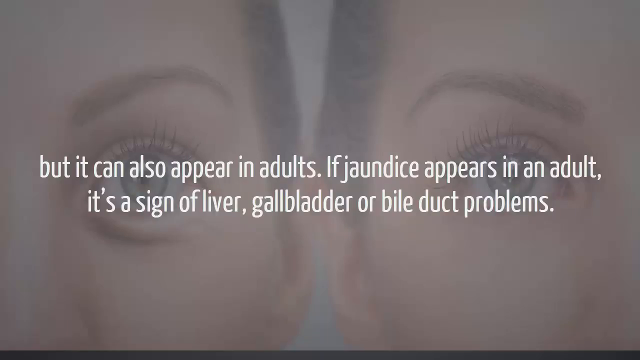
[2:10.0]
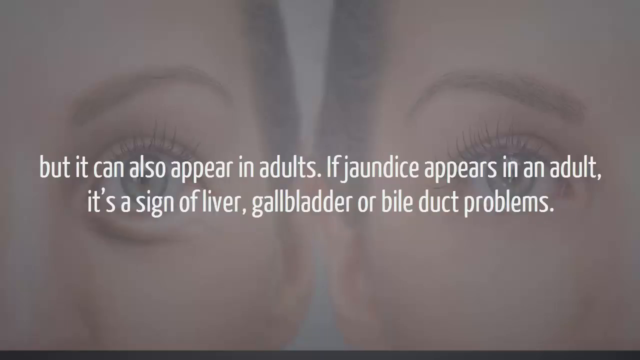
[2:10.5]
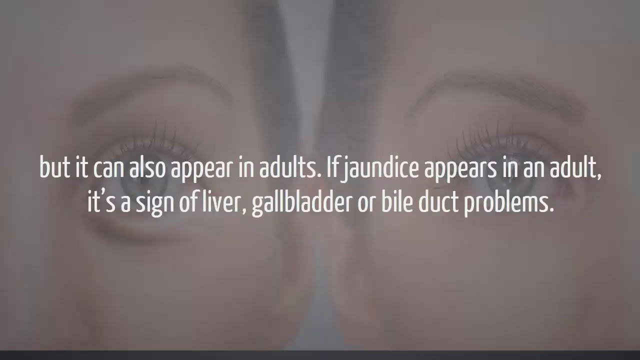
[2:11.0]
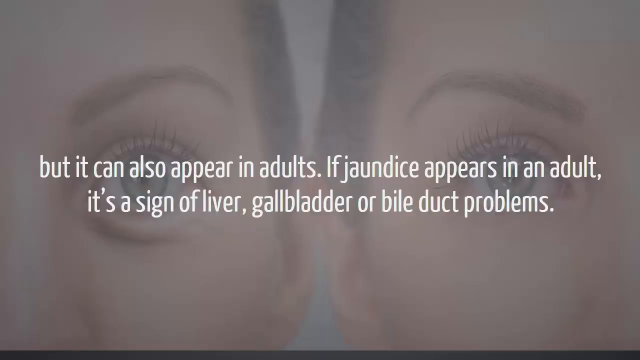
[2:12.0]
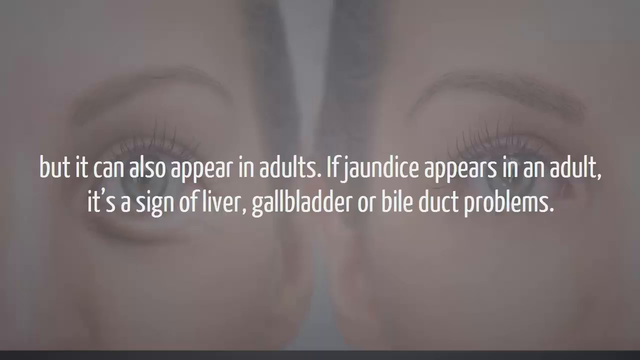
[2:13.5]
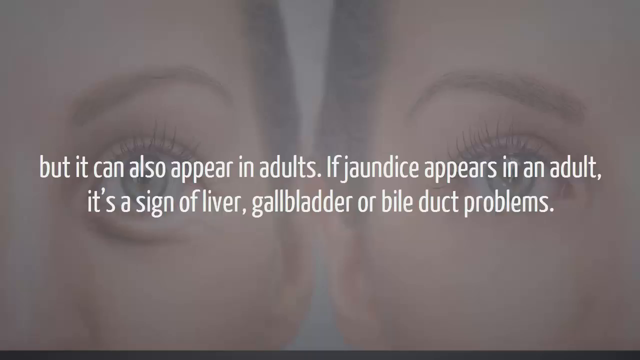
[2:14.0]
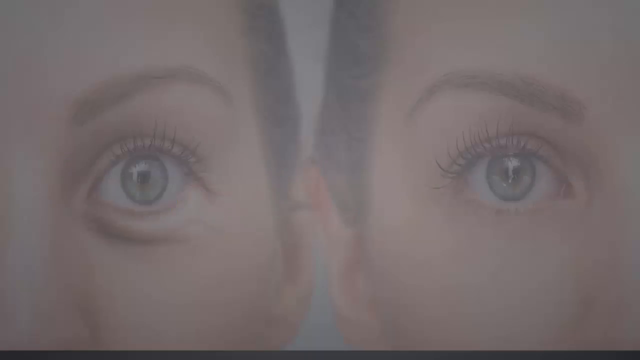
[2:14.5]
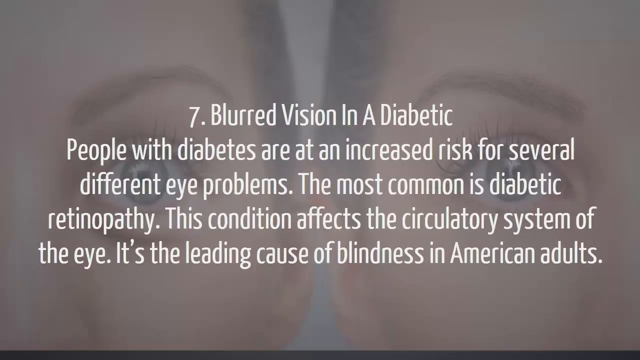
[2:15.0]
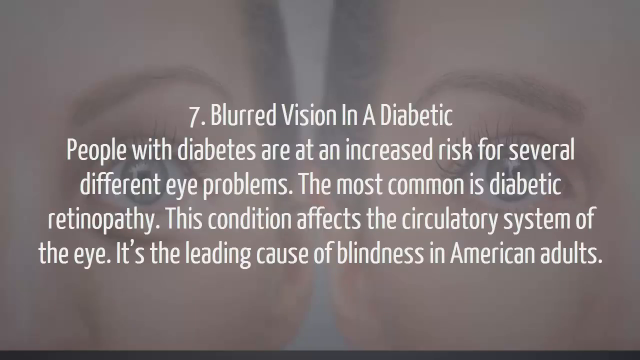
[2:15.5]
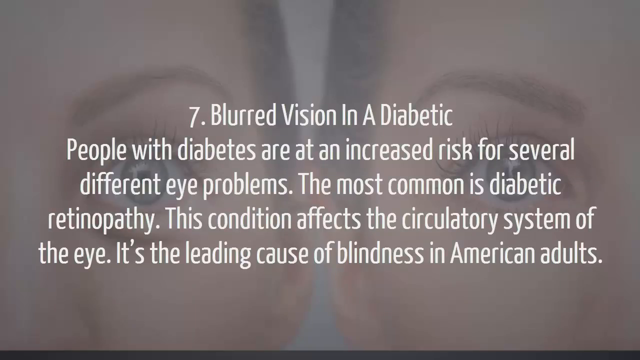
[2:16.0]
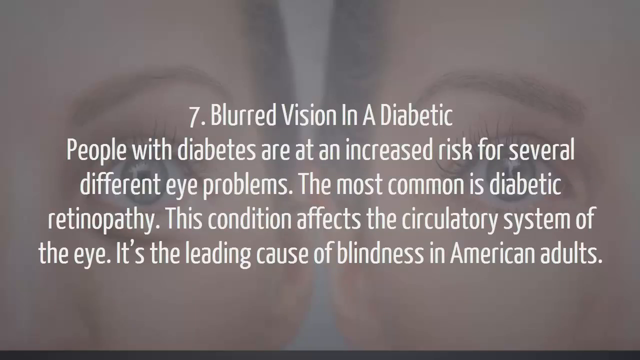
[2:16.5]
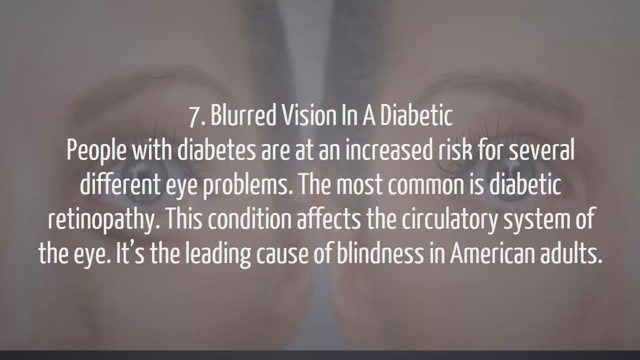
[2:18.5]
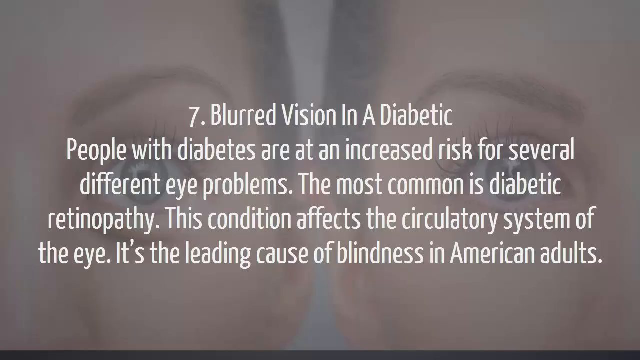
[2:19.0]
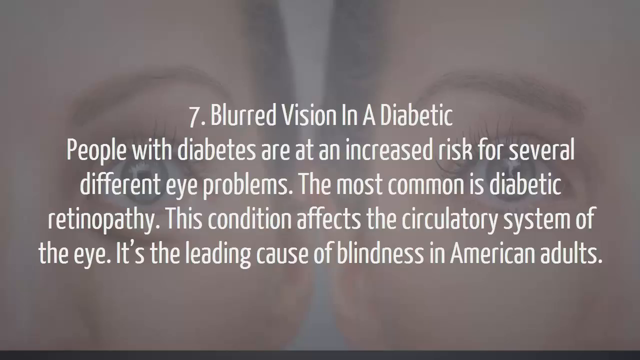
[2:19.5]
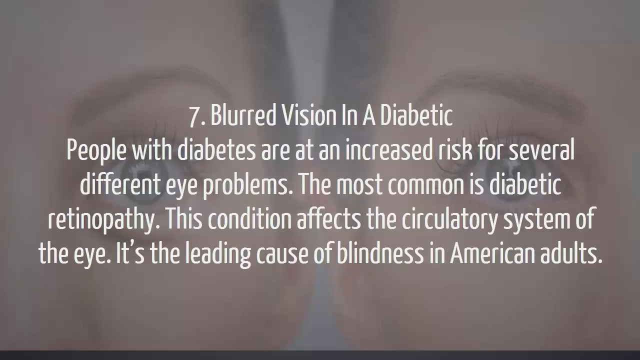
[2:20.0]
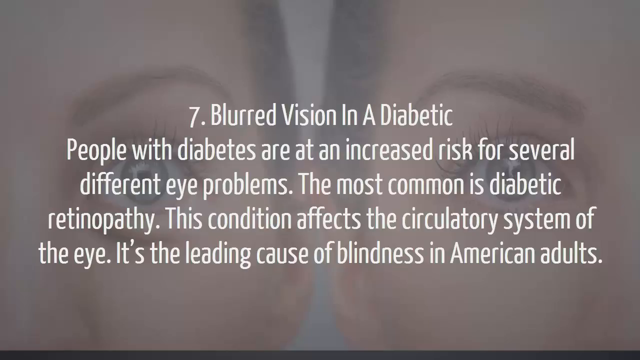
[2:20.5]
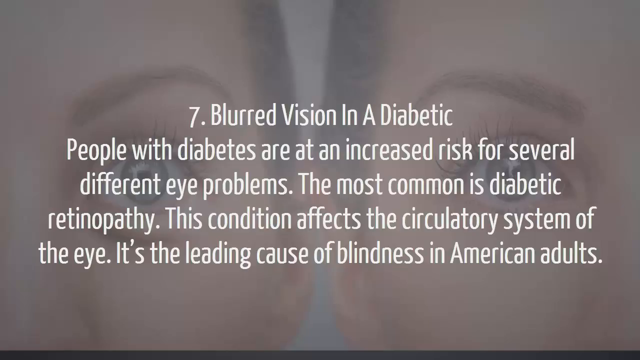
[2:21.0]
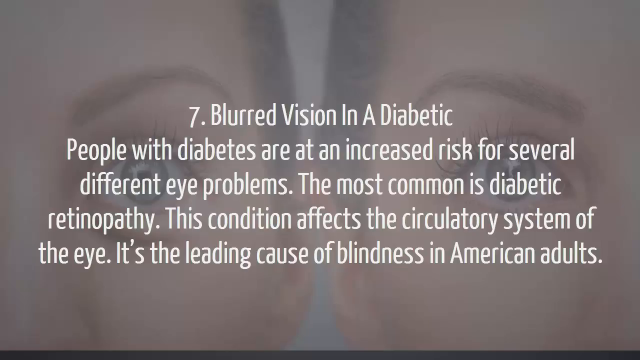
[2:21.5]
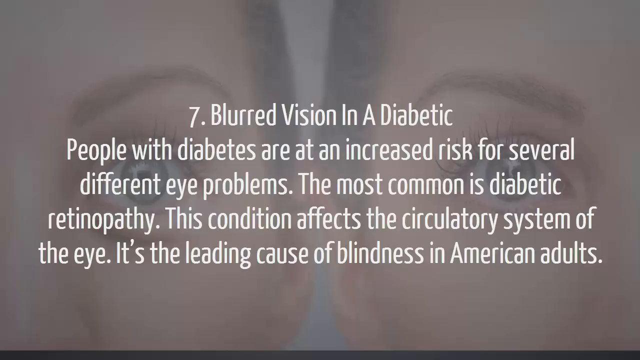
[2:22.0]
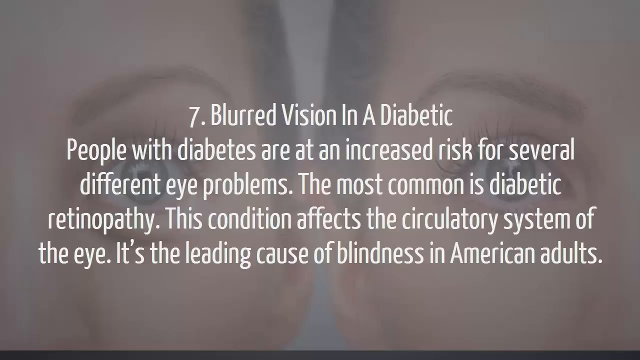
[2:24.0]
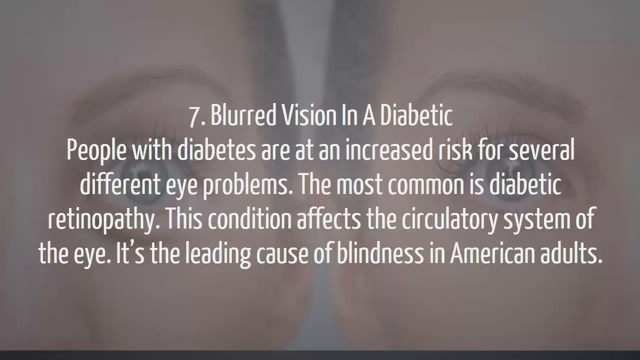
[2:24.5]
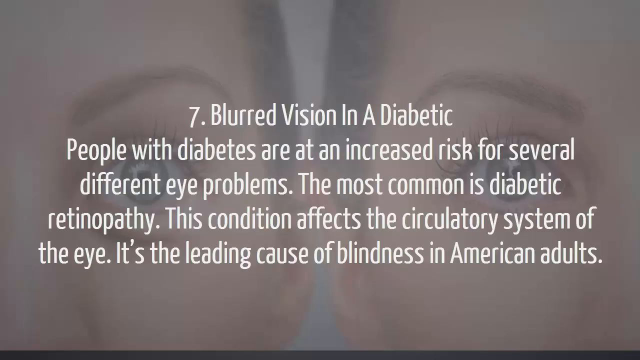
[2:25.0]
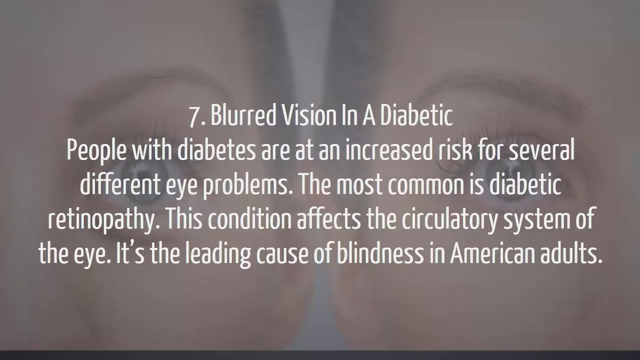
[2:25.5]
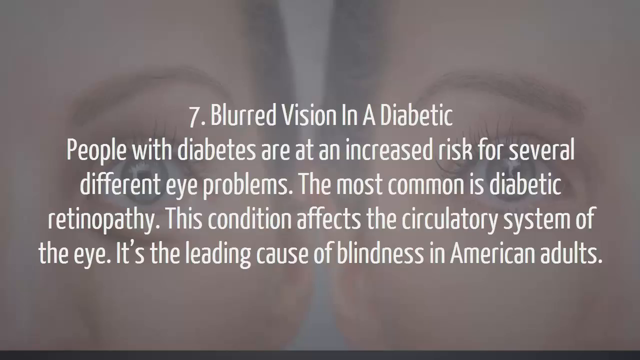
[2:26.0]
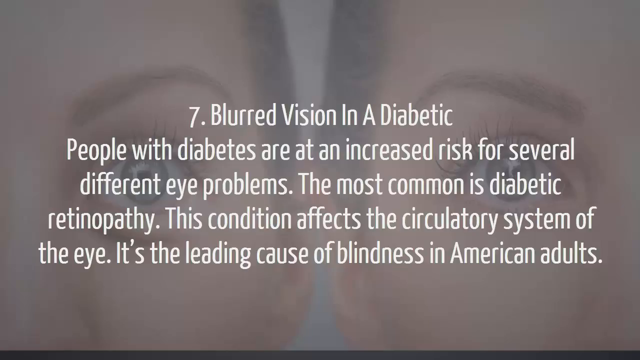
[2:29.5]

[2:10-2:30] Text about jaundice is on the screen, reading: "It can also appear in adults. If jaundice appears in an adult, it's a sign of liver, gallbladder, or bile duct problems." The video moves on to number seven: "Seven, blurred vision in a diabetic. People with diabetes are at an increased risk for several different eye problems. The most common is diabetic retinopathy. This condition affects the circulatory system of the eye. It's the leading cause of blindness in American adults." In the background are two humans, one on the right and one on the left, with each face visible only from the middle of the nose over to the ear, so only half of each face shows.